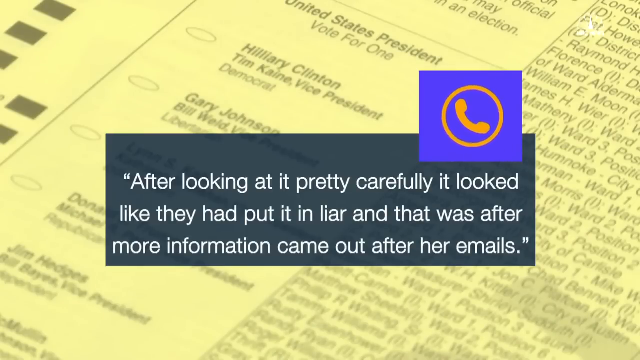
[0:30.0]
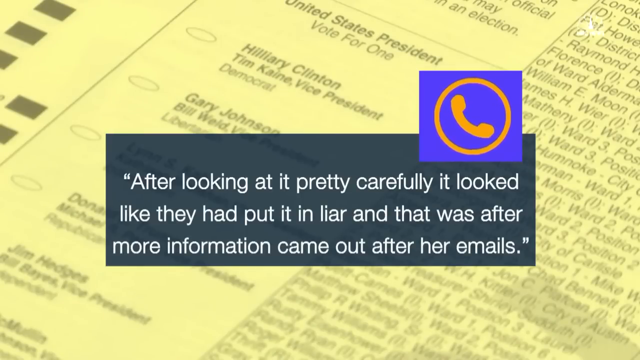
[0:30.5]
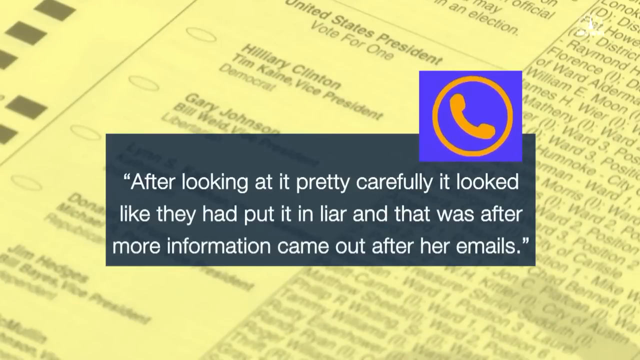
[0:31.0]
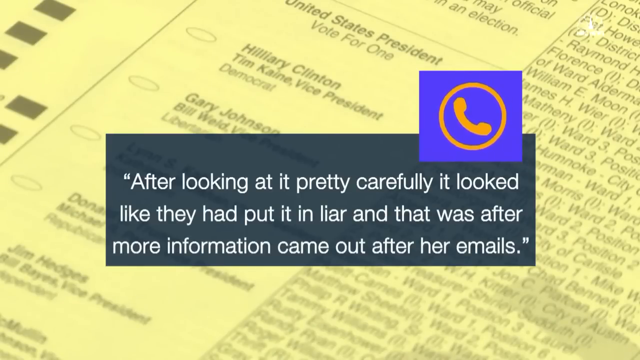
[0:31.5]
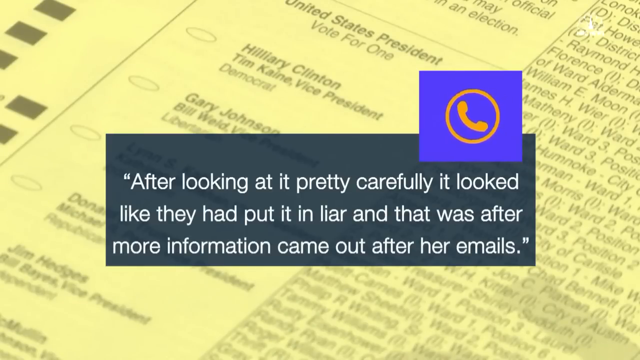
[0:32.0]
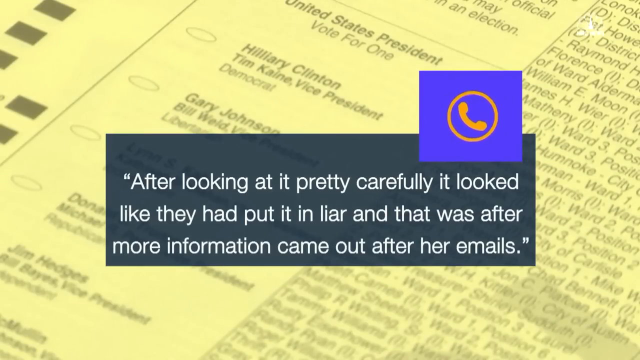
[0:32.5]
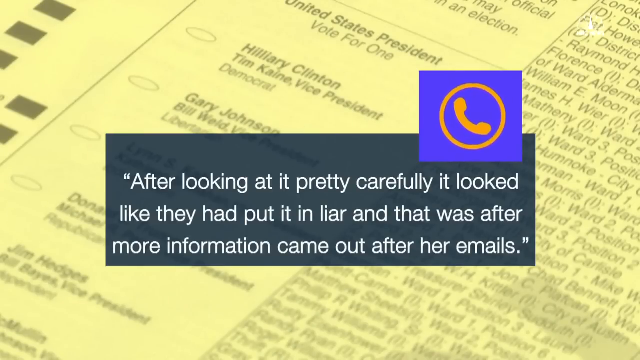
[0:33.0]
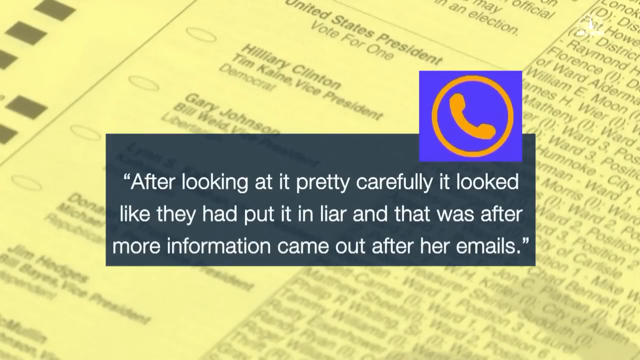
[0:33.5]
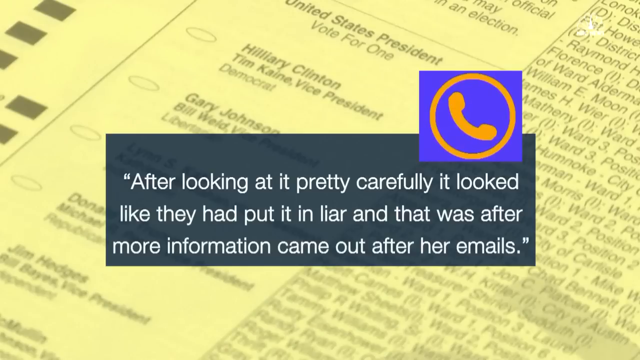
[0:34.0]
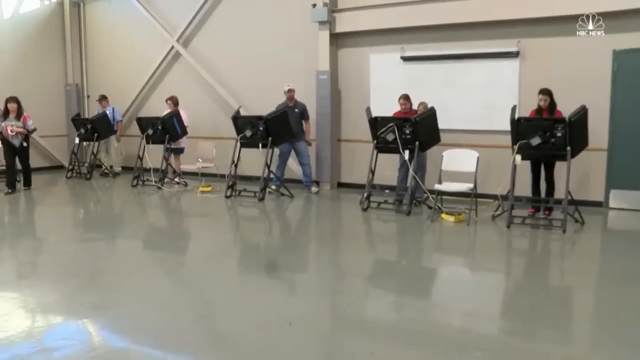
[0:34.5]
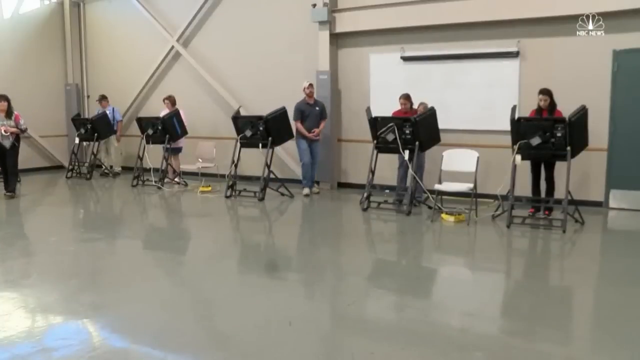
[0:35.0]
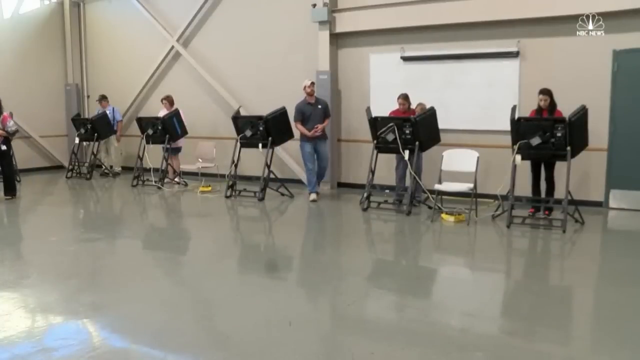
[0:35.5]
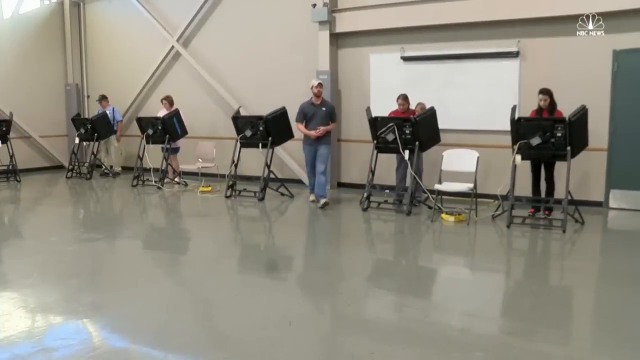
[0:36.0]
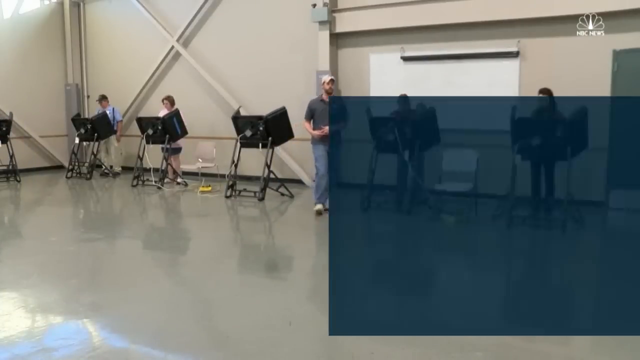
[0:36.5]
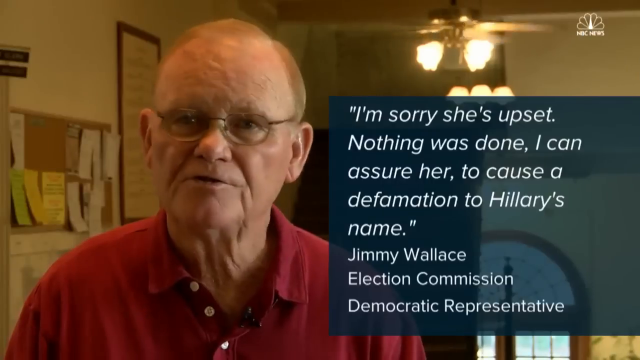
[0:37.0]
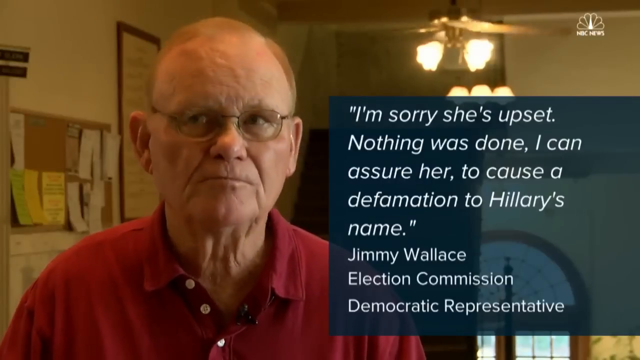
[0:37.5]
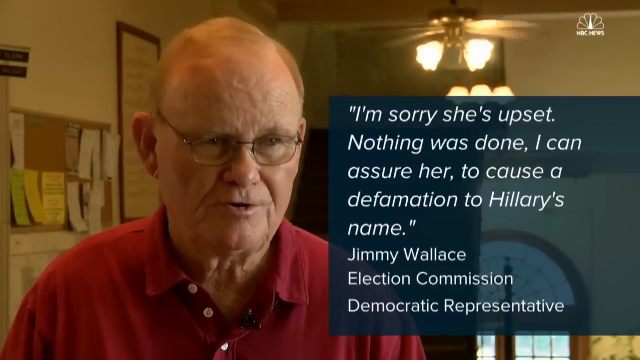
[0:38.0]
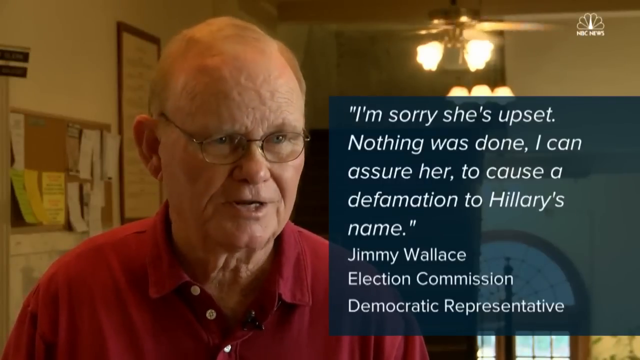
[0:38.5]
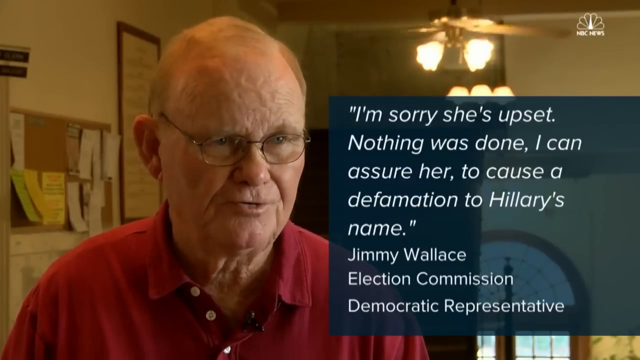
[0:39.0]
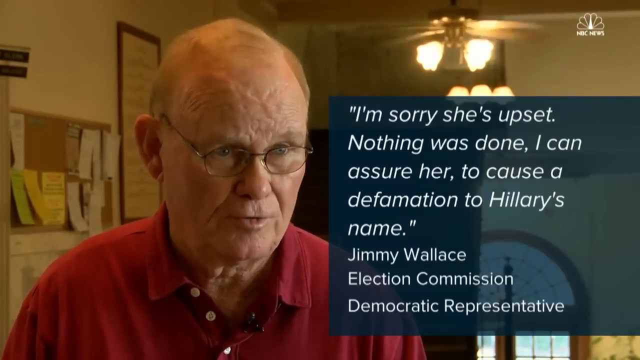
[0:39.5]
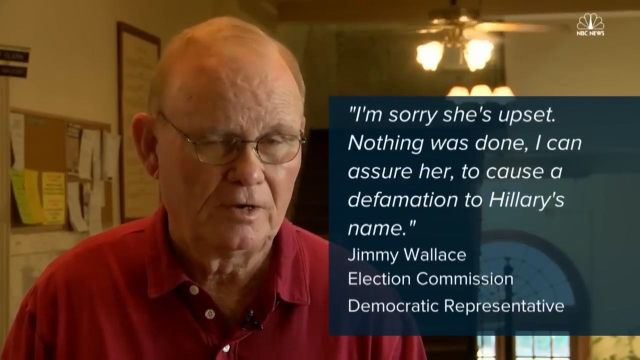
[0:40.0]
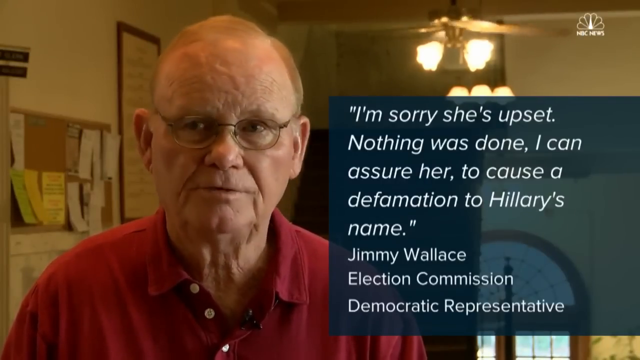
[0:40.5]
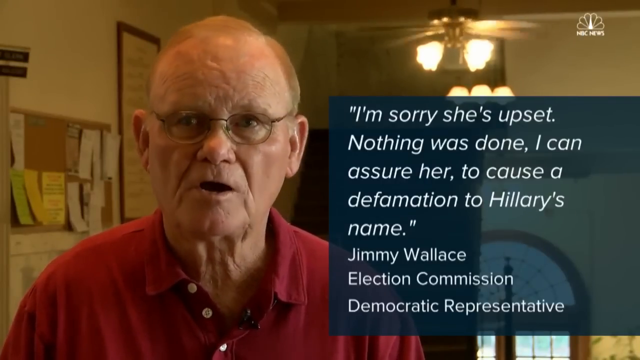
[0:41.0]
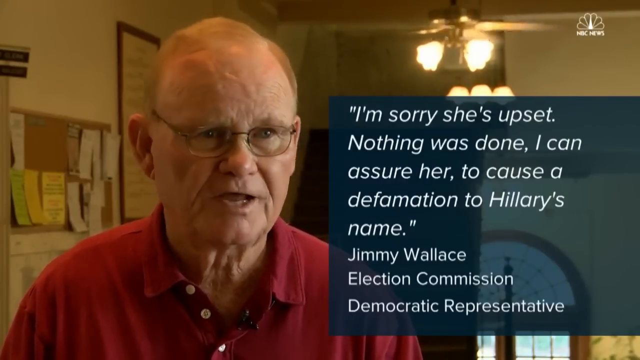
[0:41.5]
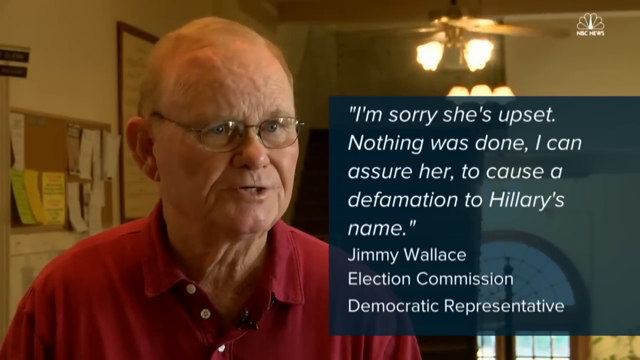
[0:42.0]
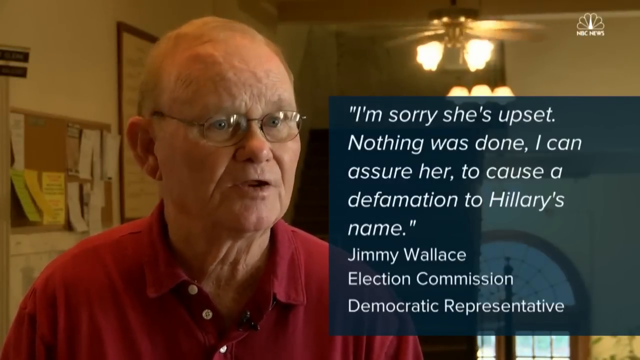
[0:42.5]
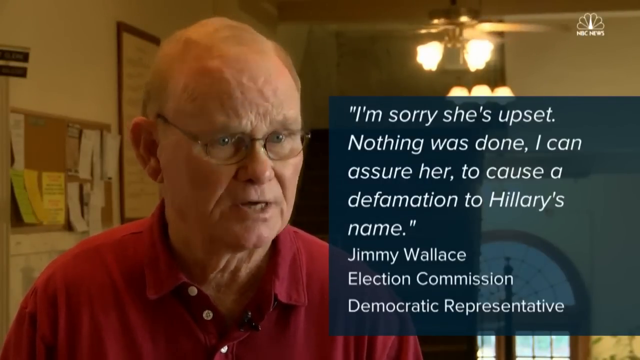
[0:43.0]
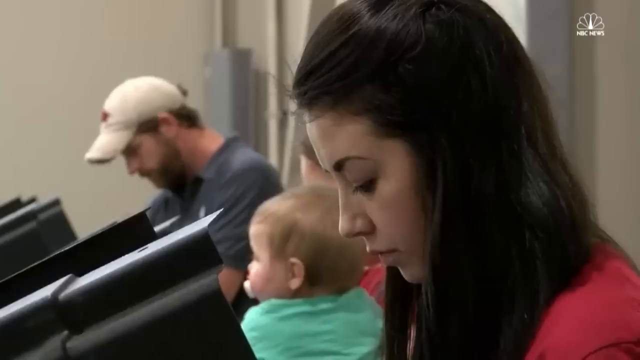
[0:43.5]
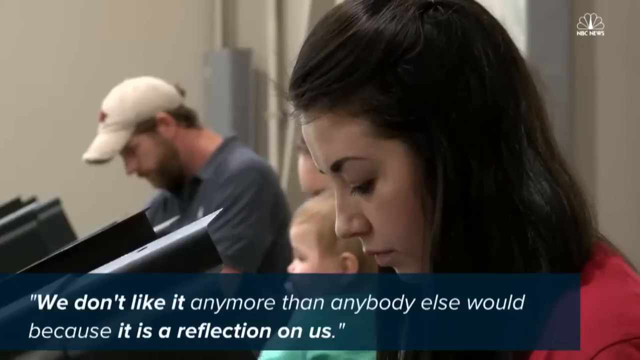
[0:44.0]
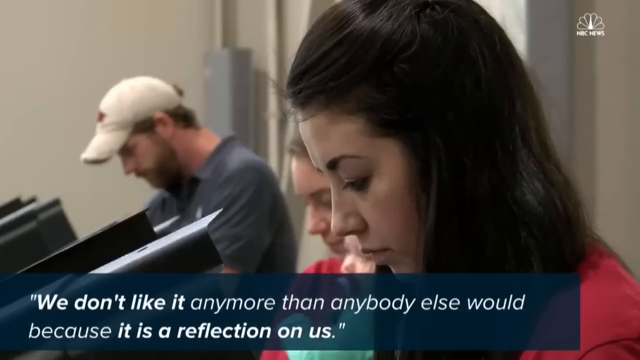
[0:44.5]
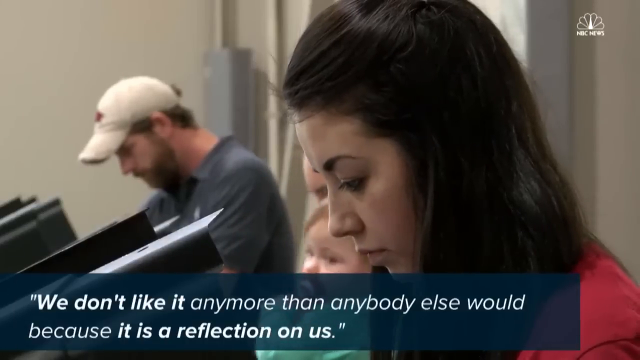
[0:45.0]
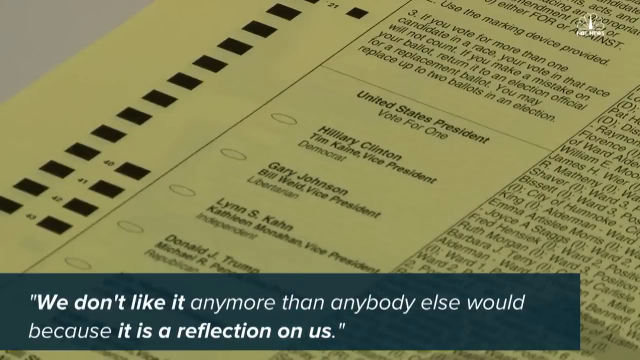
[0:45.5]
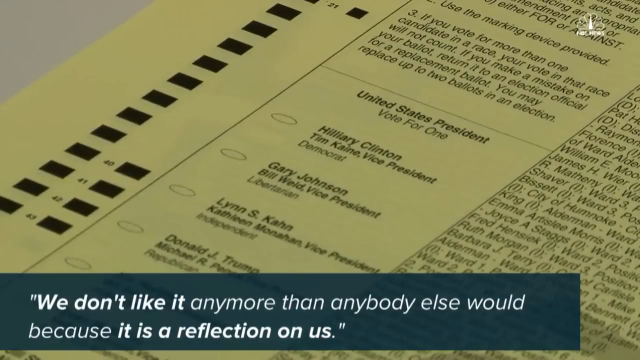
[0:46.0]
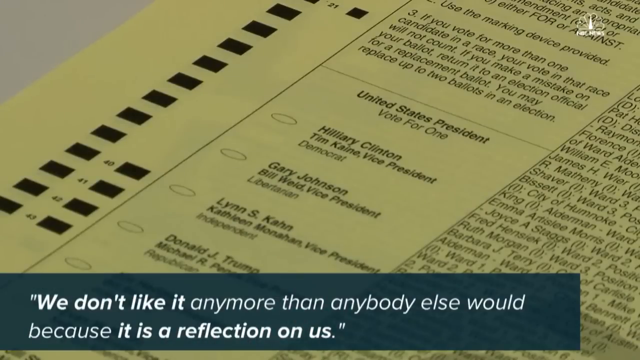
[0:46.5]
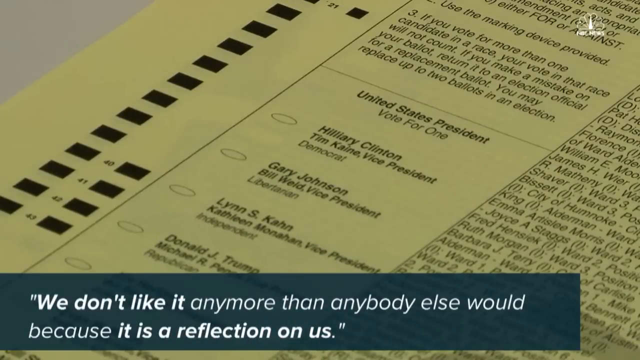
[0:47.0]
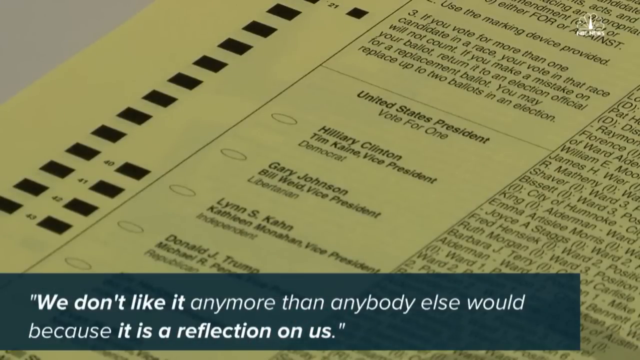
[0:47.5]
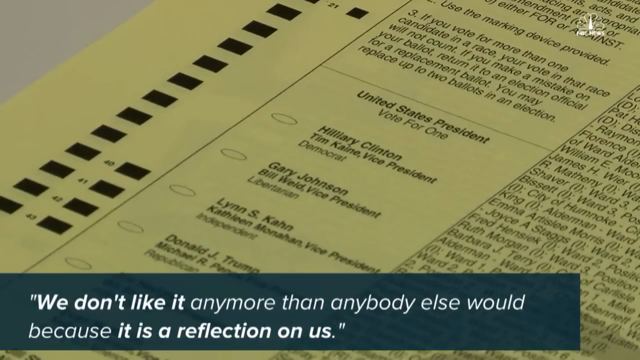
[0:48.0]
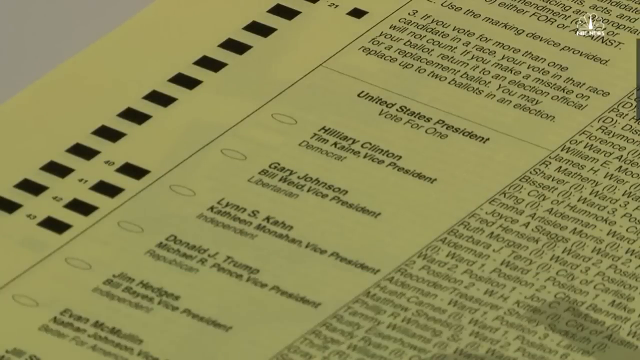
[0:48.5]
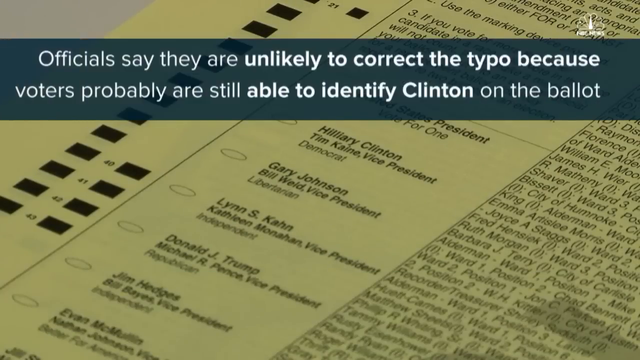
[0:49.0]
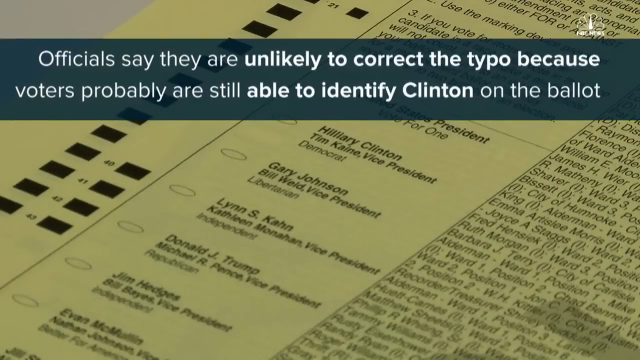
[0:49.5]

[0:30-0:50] The mistake on the ballot paper is examined, with text saying that on careful inspection it looked like "liar" had been put in, after more information came out about her emails. The scene moves to a polling station, where people are behind black booths, probably casting their votes. A man, Jimmy Wallace, head of the election commission, is interviewed; he apologises for her being upset and says nothing was done deliberately, that it was just a mistake not meant to cause defamation, and that they would like to correct the typo. Hillary Clinton is also shown shaking hands with someone.